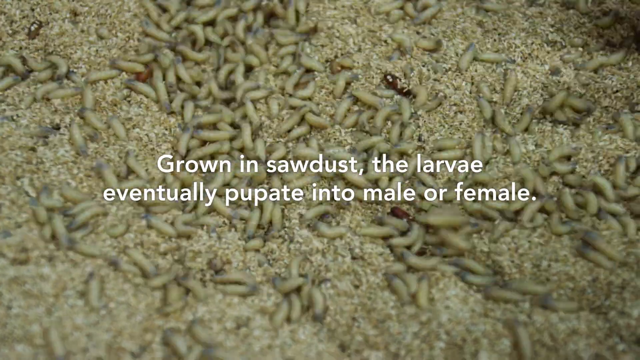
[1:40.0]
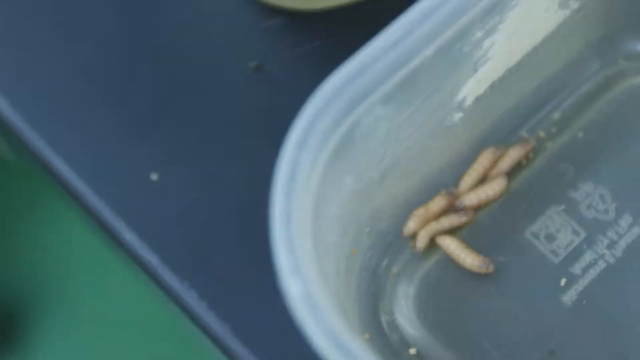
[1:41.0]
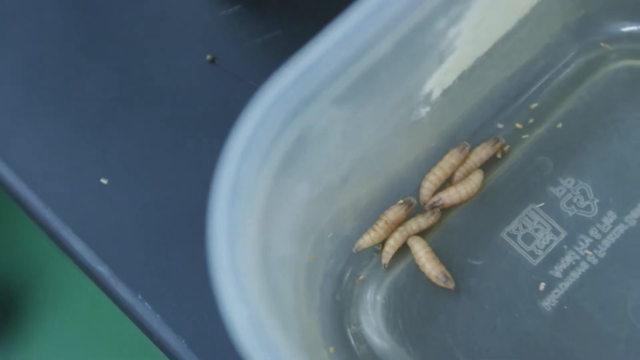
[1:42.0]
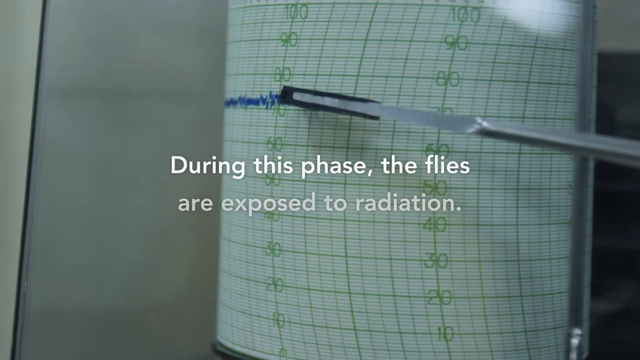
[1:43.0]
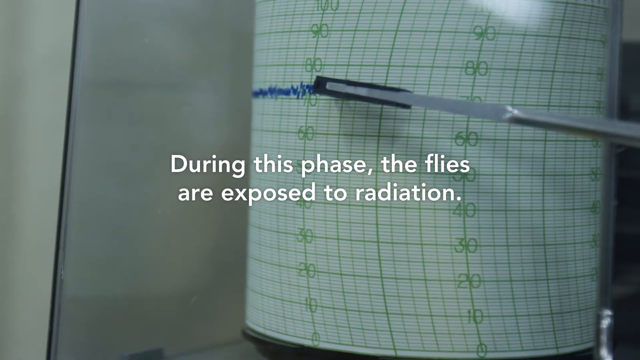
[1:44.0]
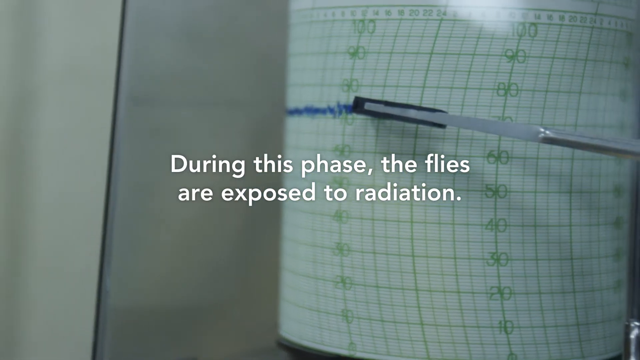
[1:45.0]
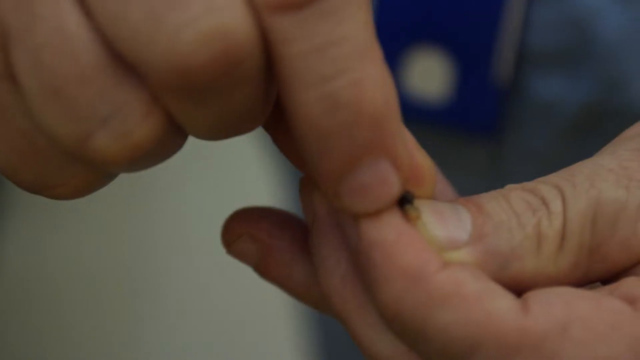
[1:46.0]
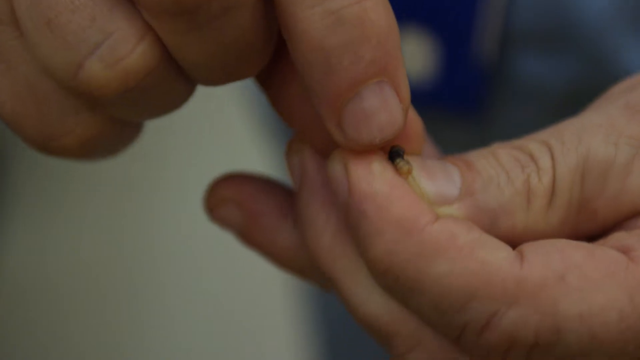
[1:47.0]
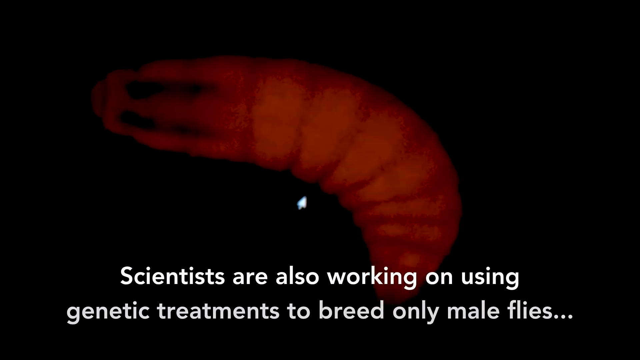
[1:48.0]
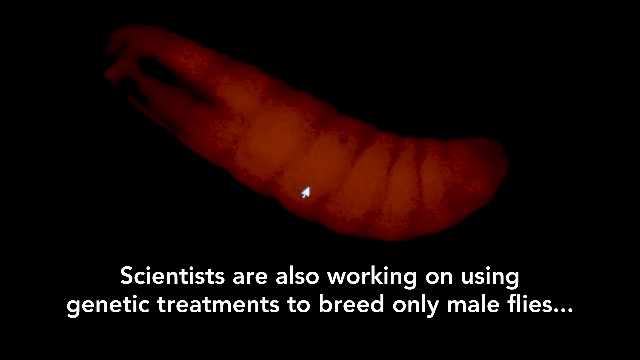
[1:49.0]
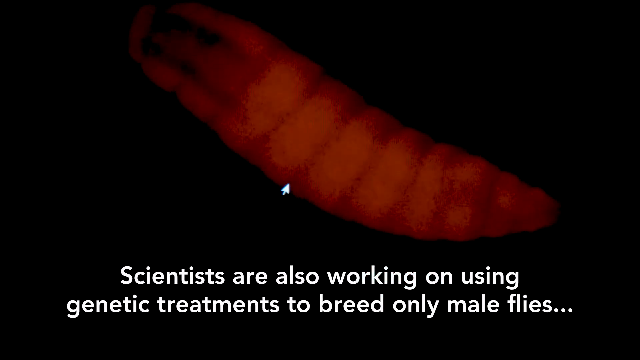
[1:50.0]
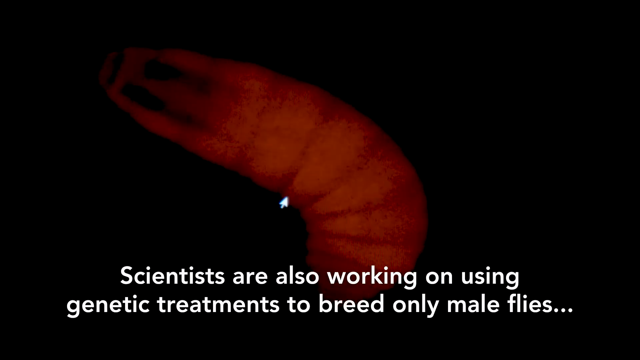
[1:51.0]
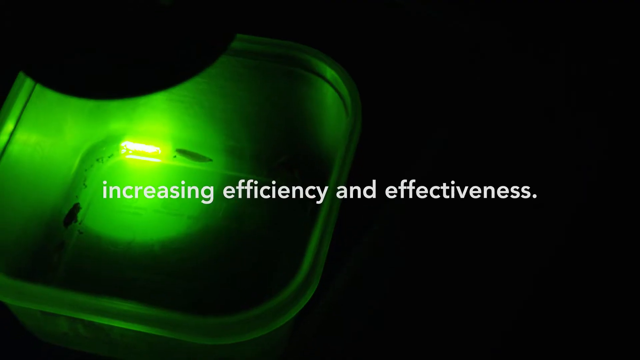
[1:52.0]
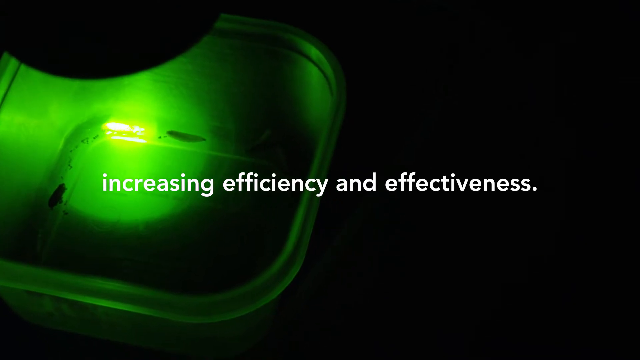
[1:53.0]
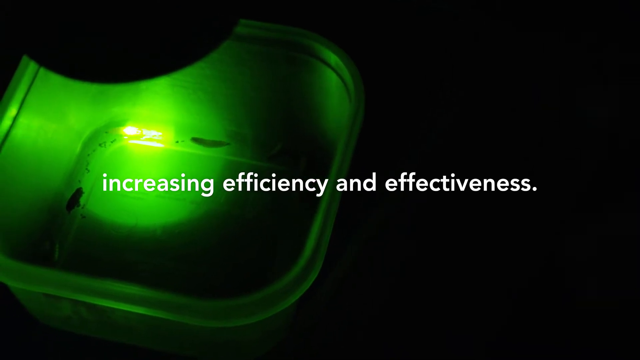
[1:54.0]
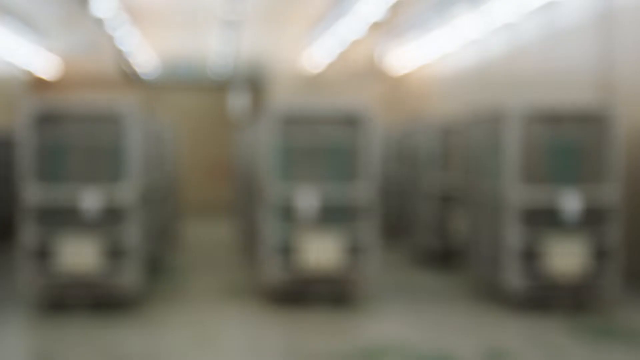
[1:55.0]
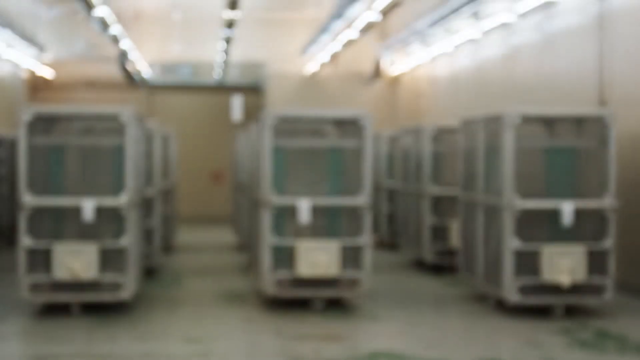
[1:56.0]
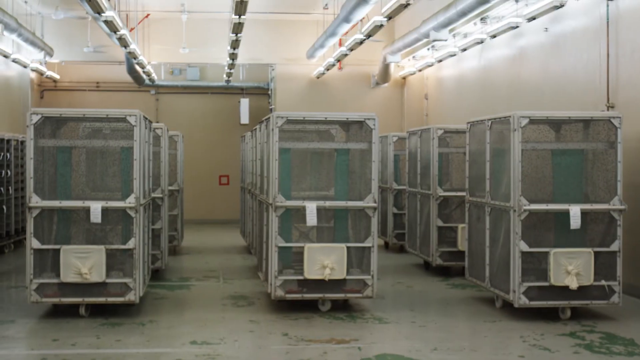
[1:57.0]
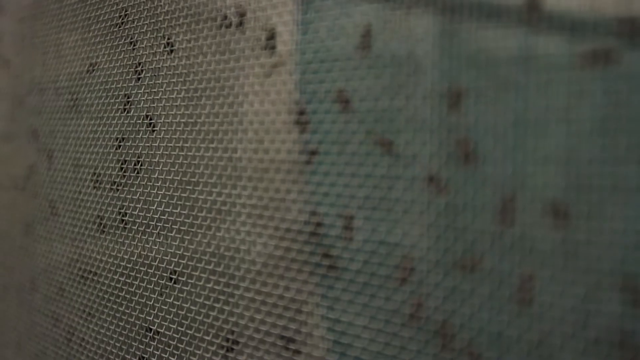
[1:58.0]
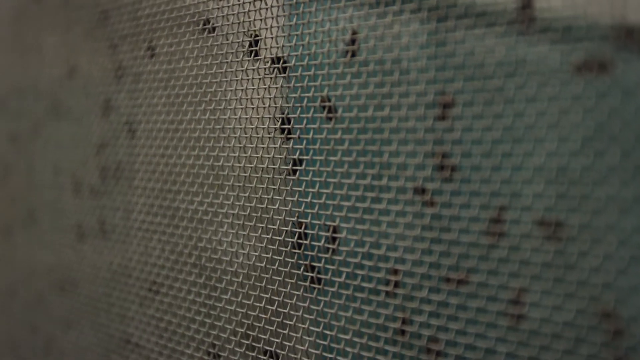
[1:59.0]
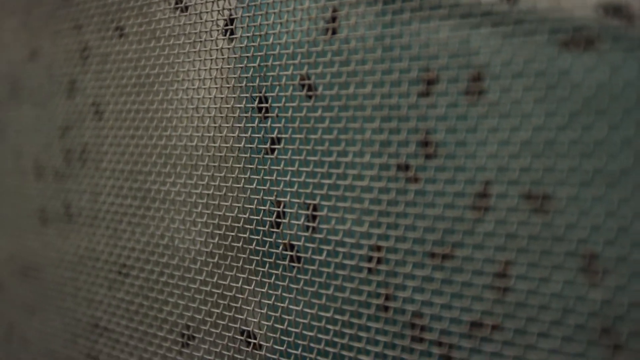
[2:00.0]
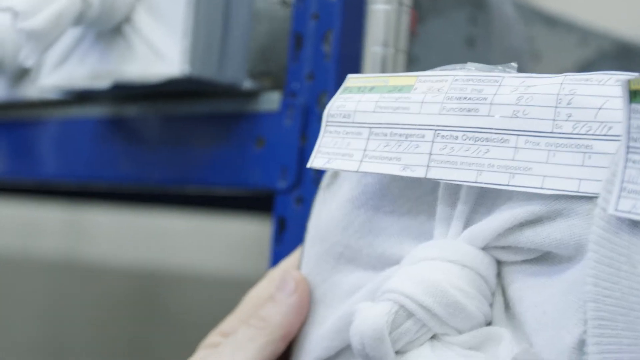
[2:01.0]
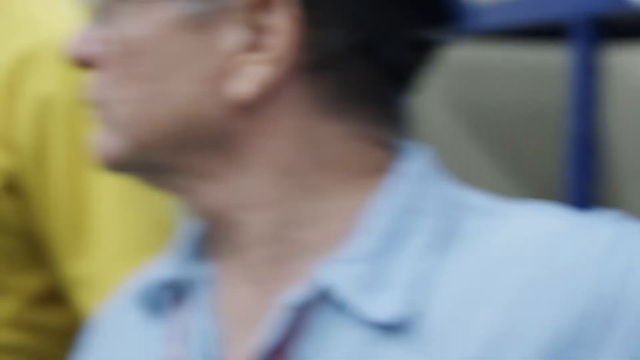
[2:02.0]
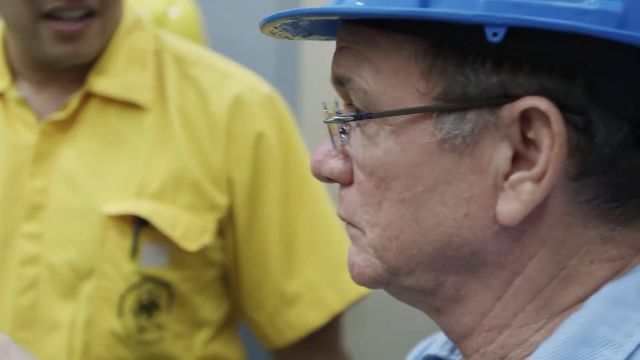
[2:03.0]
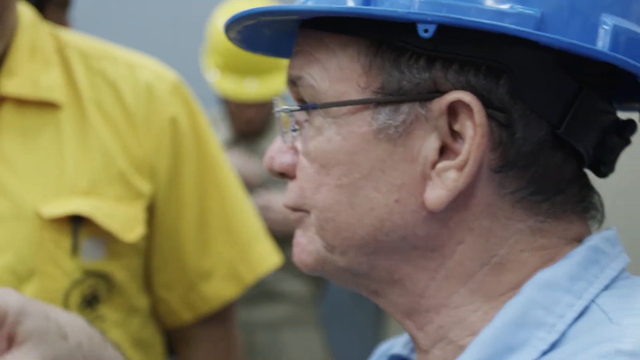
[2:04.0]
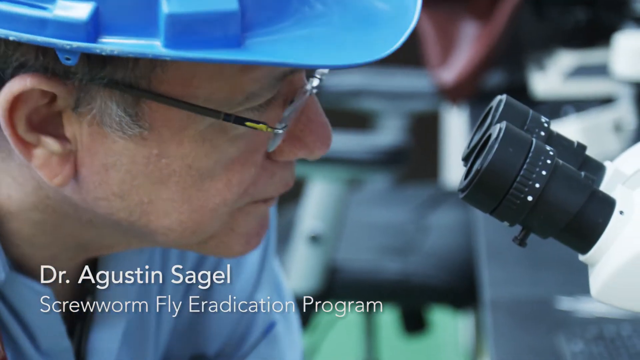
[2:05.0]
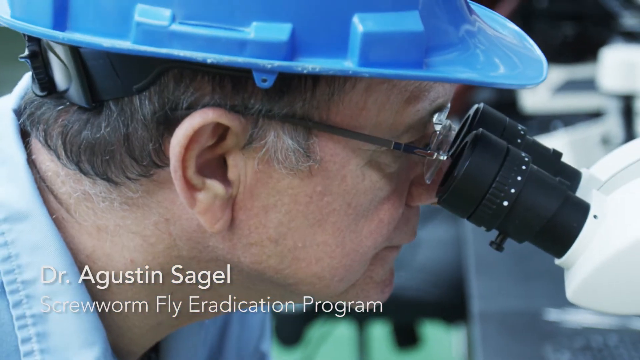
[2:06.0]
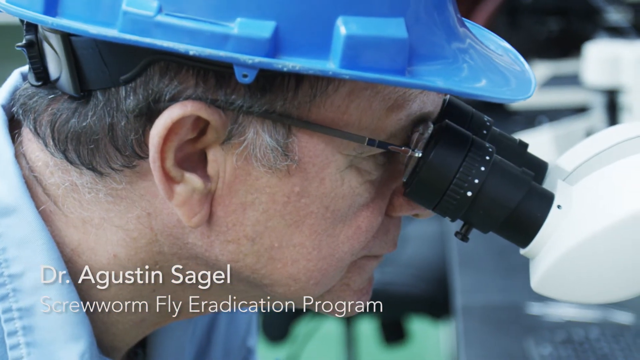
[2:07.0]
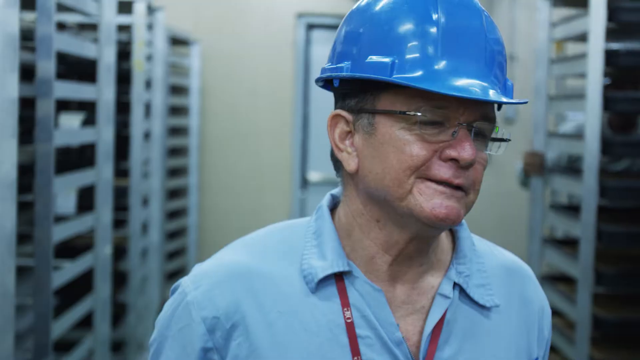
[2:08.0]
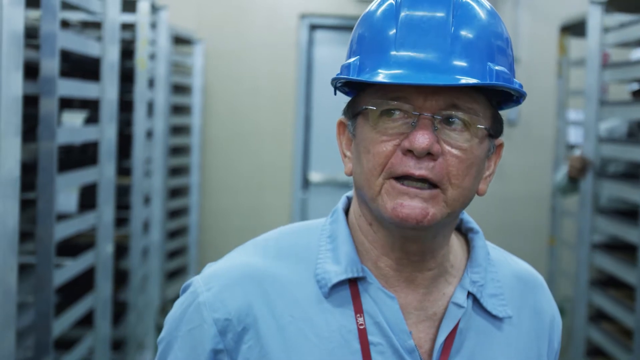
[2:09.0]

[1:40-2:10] Many larvae crawl around in a bin as text comes across the screen: "grown in sawdust, the larvae eventually pupate into male or female." A zoomed-in view then focuses on a couple of the larvae crawling around in a clear plastic bin. Next, the screen reads "during this phase the flies are exposed to radiation", and two hands are shown holding one of the larvae. A screen with a black background follows, with text reading "Scientists are also working on using genetic treatments to breed only male flies." The larva wiggles around on the screen a little before the next text, "increasing efficiency and effectiveness", appears. The larva is shown underneath a light. Various shots then show different parts of the laboratory, with workers working on the project and looking into microscopes.